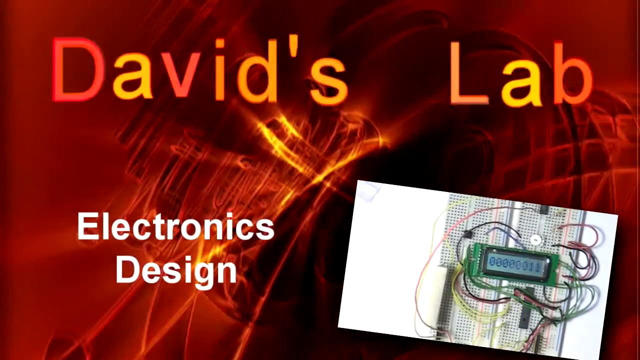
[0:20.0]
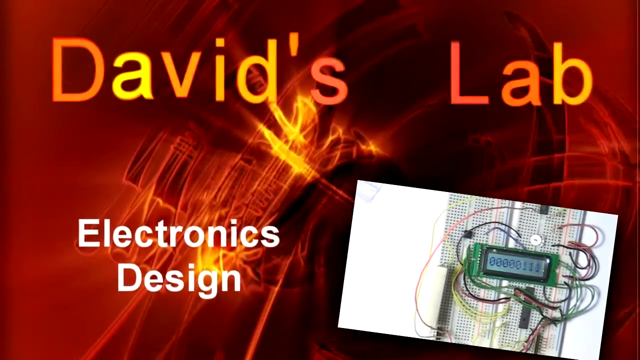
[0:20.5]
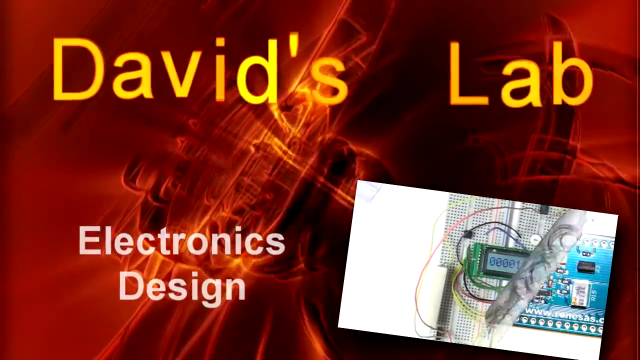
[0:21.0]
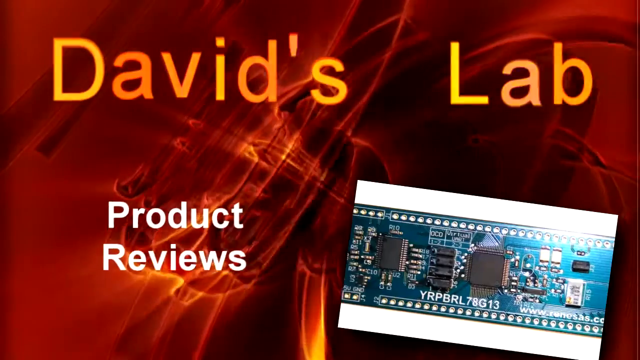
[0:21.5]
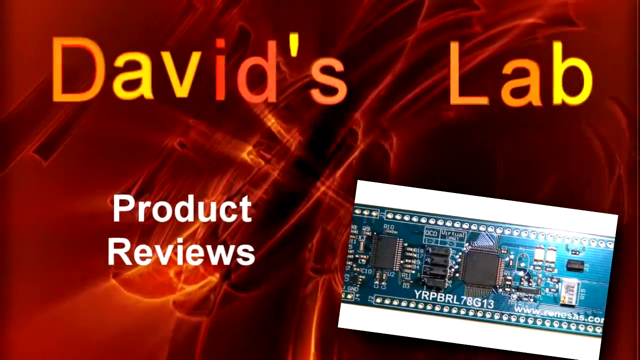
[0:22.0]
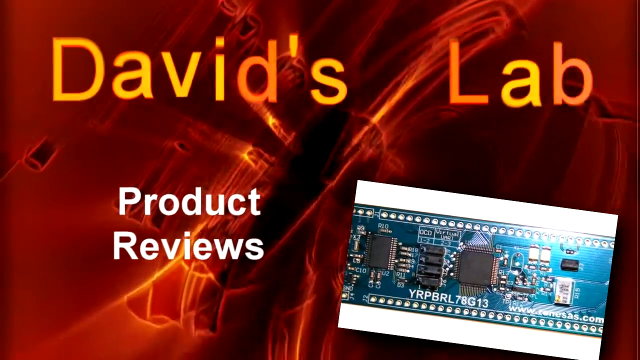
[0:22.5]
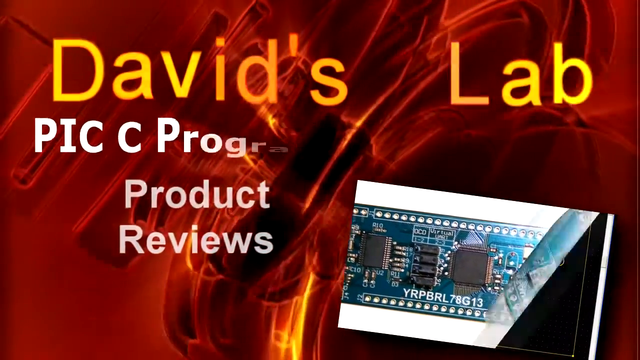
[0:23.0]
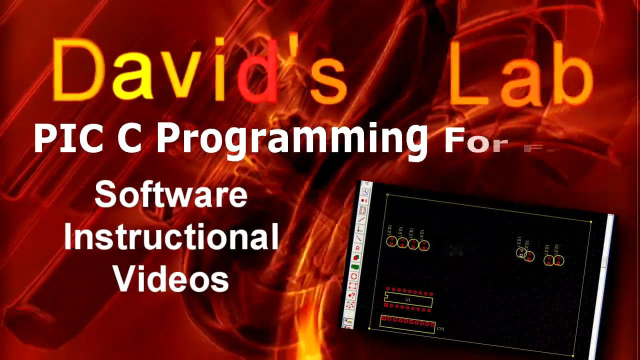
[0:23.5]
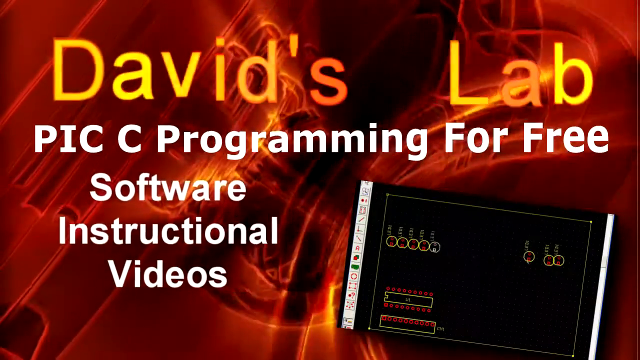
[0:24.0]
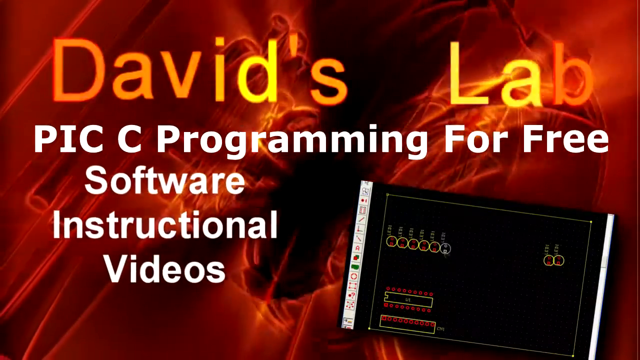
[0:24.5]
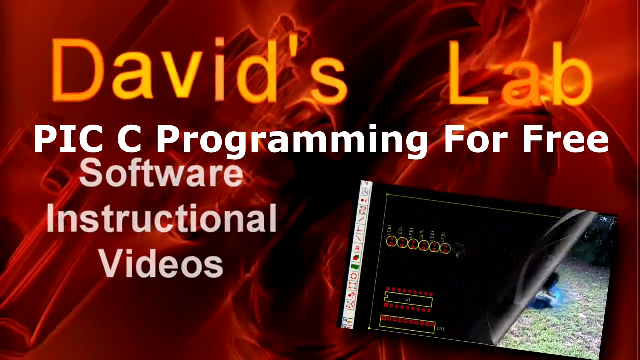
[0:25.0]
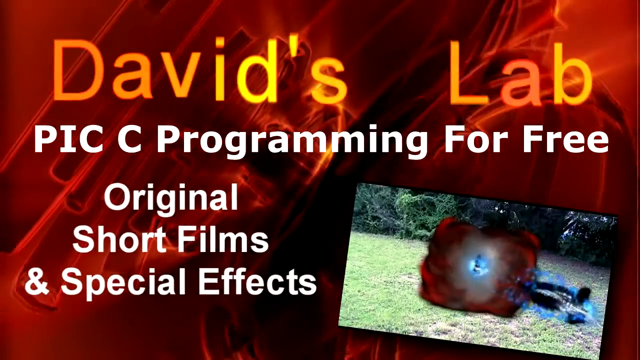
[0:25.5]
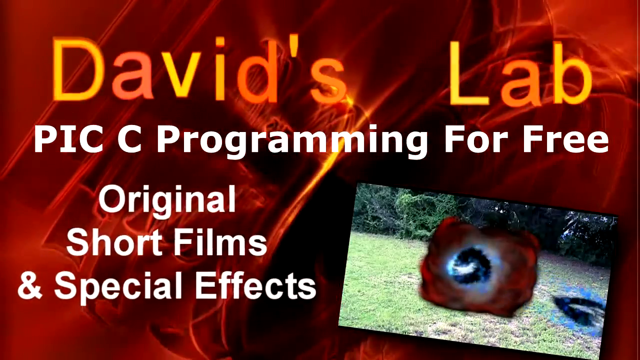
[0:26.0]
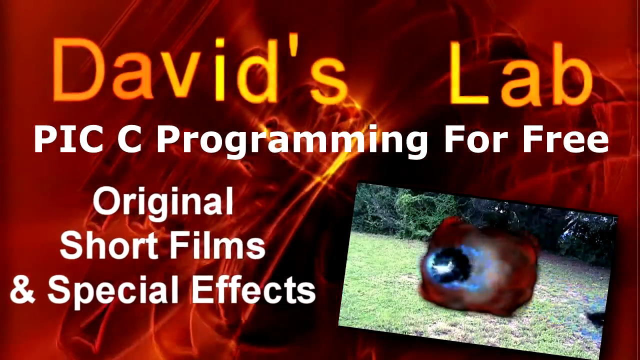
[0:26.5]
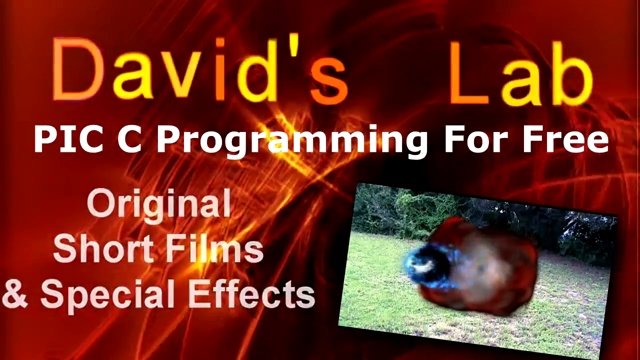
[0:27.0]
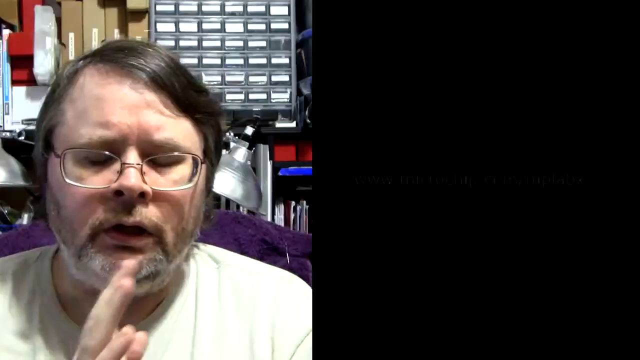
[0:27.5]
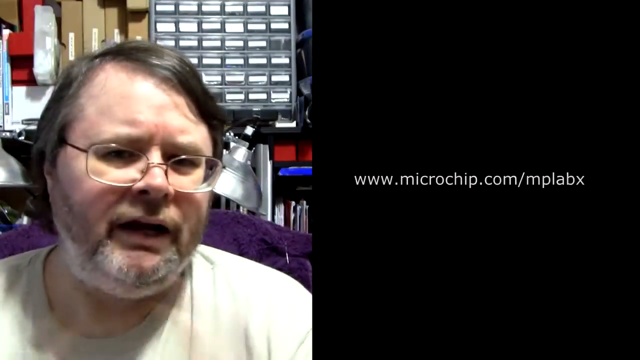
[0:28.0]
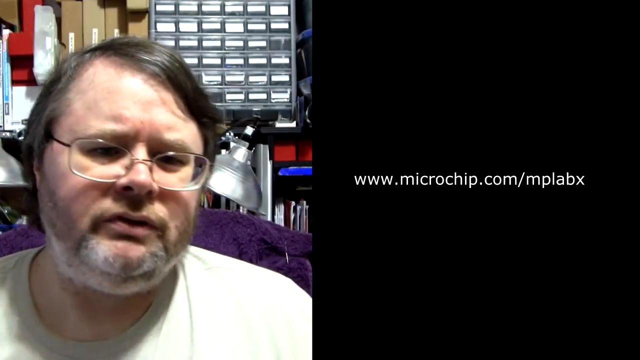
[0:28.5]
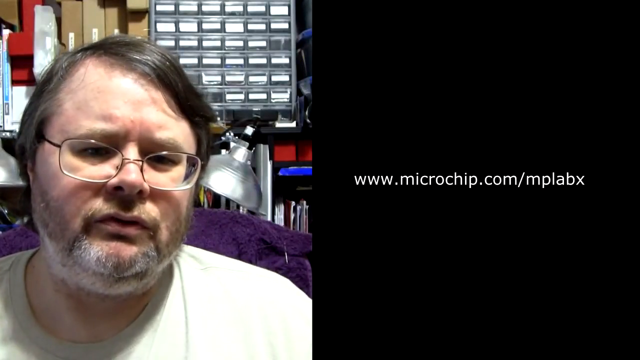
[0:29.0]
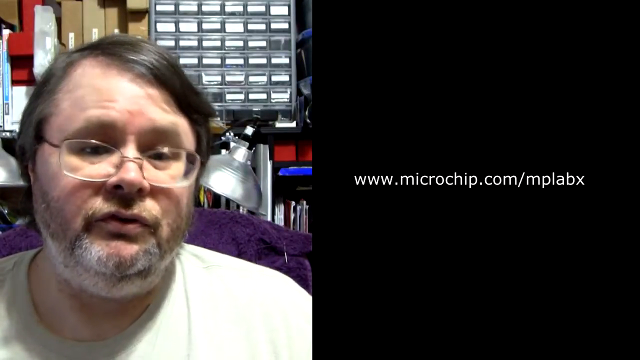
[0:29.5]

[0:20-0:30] A template background appears with wafting, fiery red colors that look almost neon but dark. At the top of the screen are the words "David's Lab", each letter in red, orange or yellow. At the bottom left, in white letters, is "Electronics Design". There is an image of some type of wiring connected to a green motherboard or computer chip that also seems to have an LED screen with numbers, almost like a clock. It seems to be hanging on some type of white wall with holes in it.